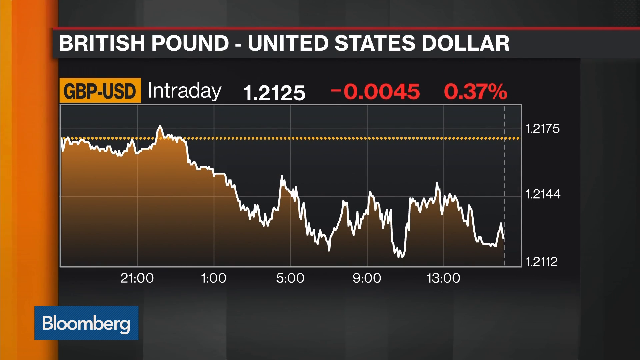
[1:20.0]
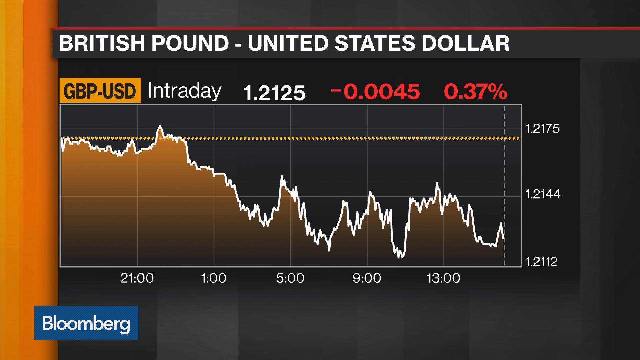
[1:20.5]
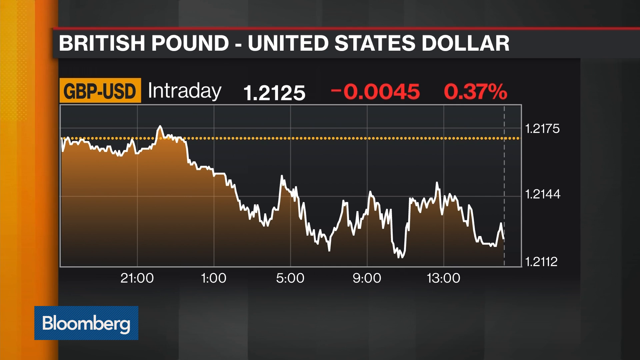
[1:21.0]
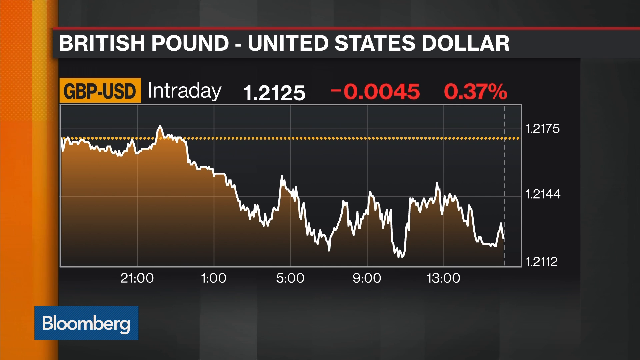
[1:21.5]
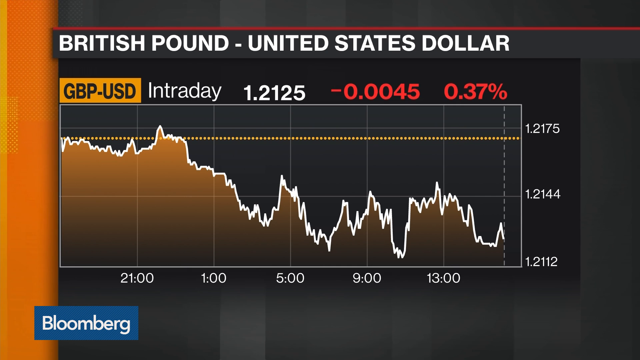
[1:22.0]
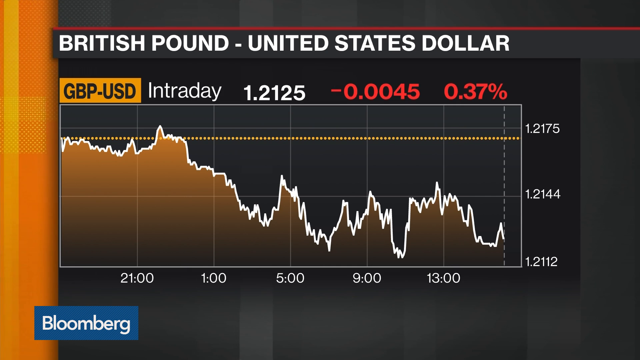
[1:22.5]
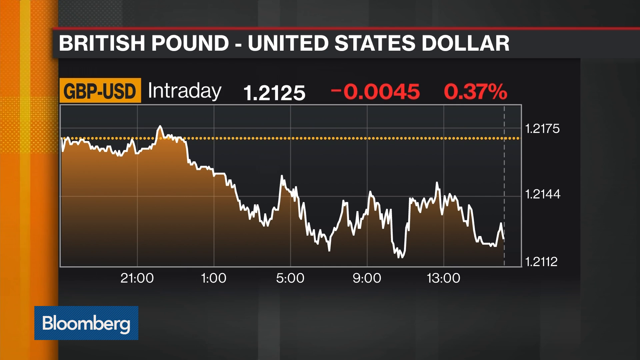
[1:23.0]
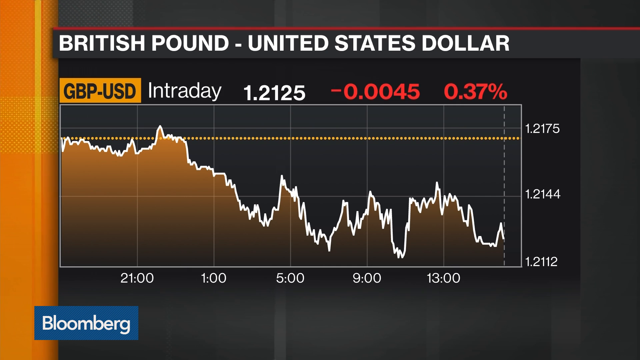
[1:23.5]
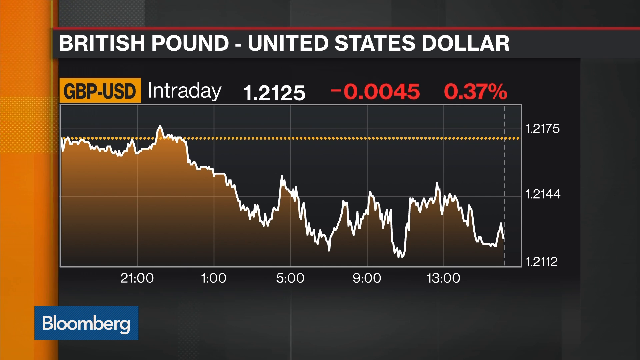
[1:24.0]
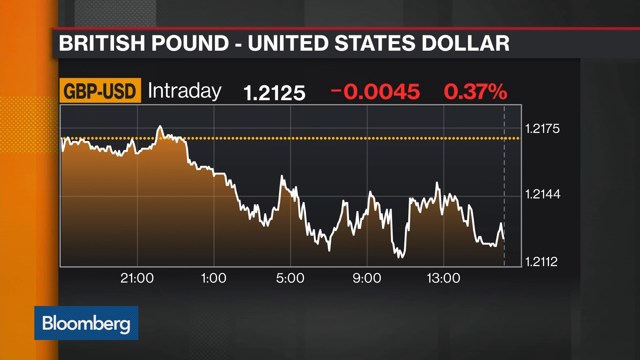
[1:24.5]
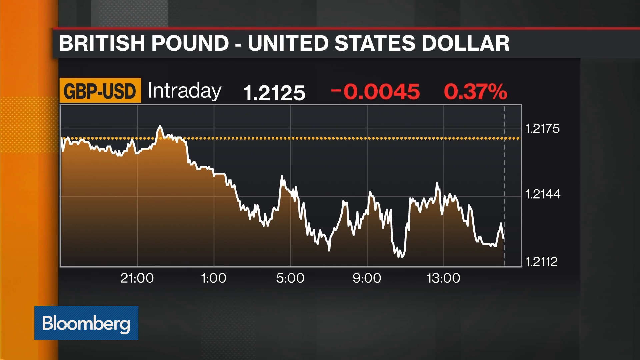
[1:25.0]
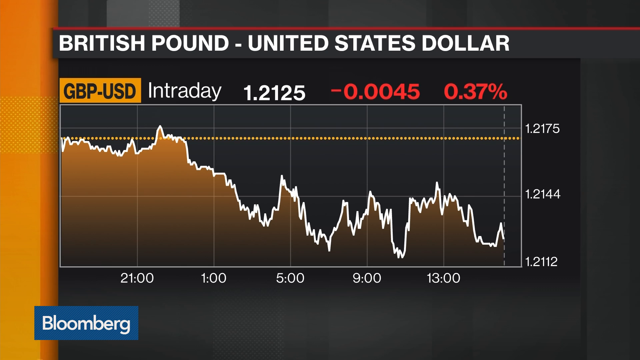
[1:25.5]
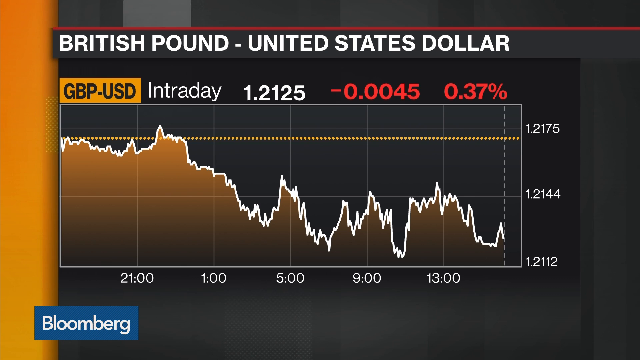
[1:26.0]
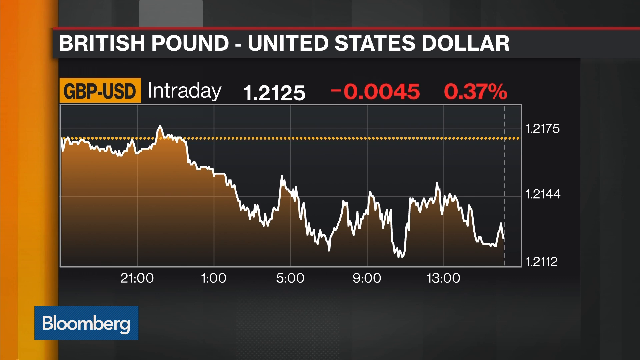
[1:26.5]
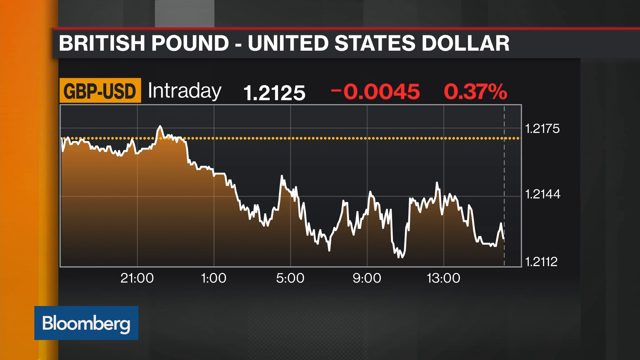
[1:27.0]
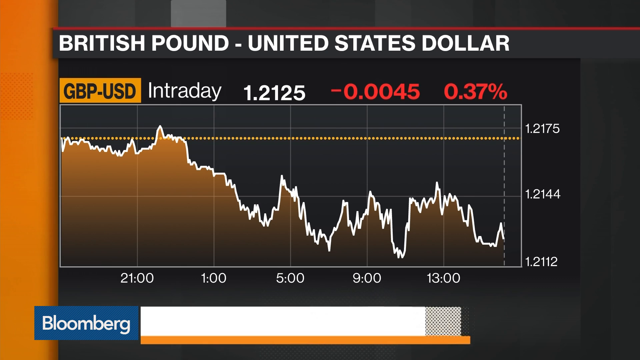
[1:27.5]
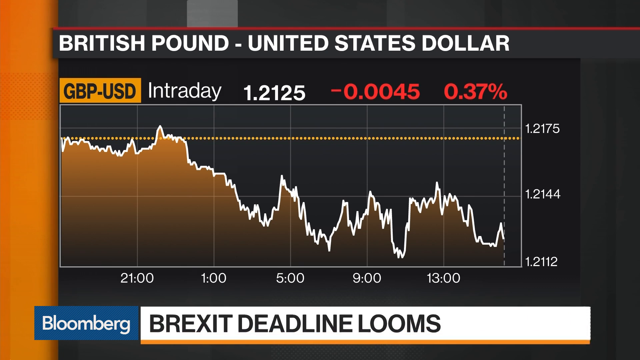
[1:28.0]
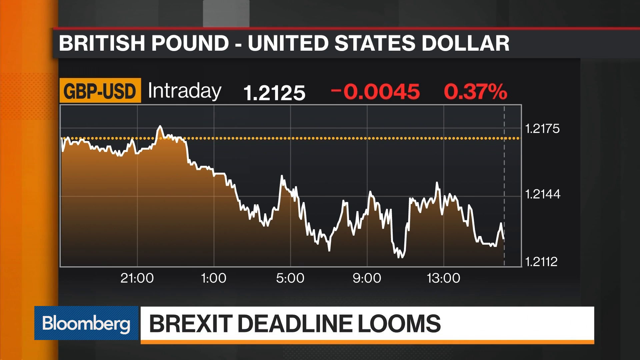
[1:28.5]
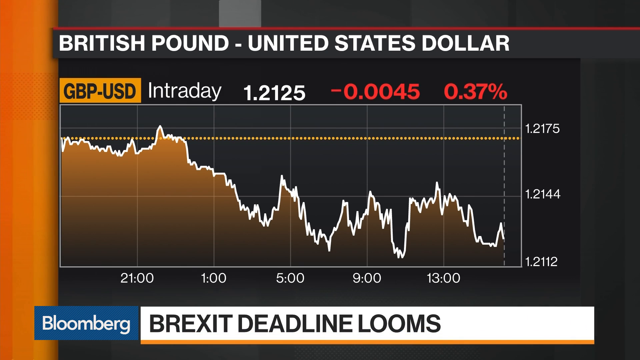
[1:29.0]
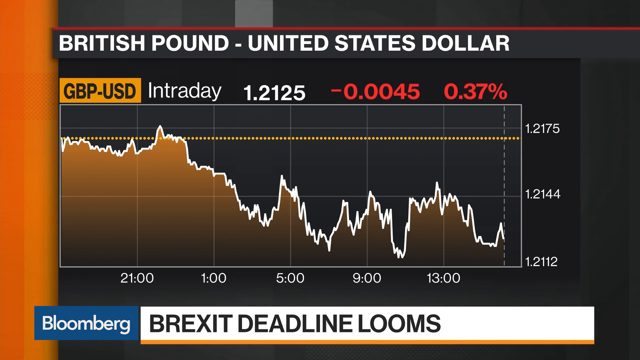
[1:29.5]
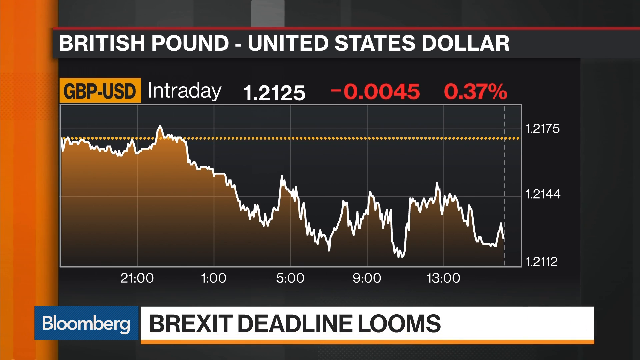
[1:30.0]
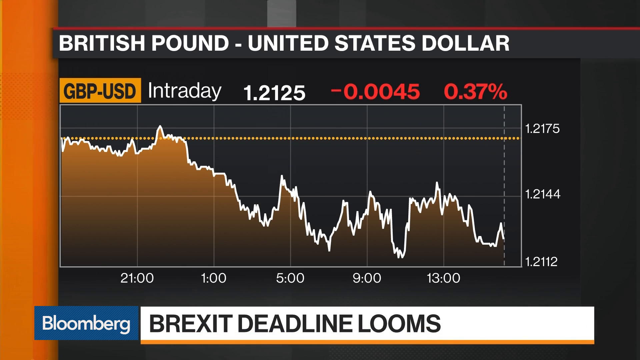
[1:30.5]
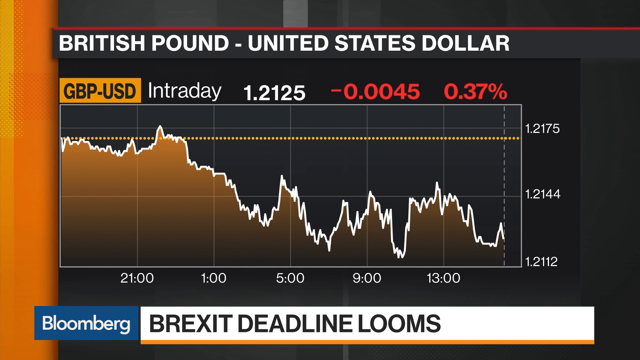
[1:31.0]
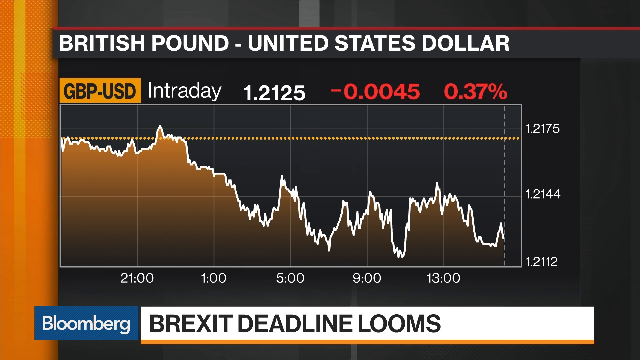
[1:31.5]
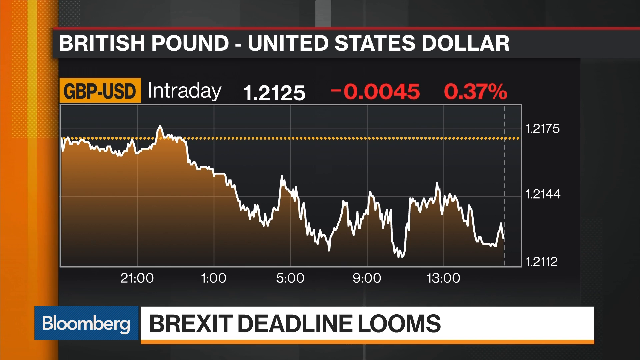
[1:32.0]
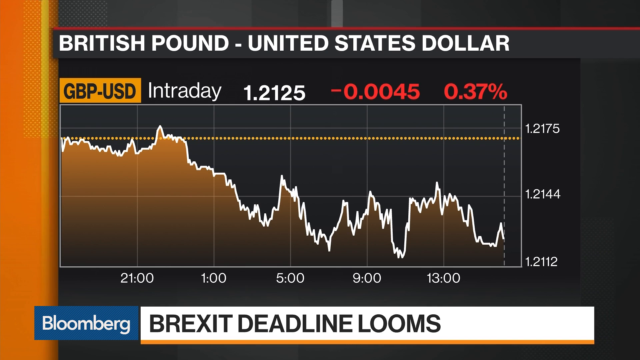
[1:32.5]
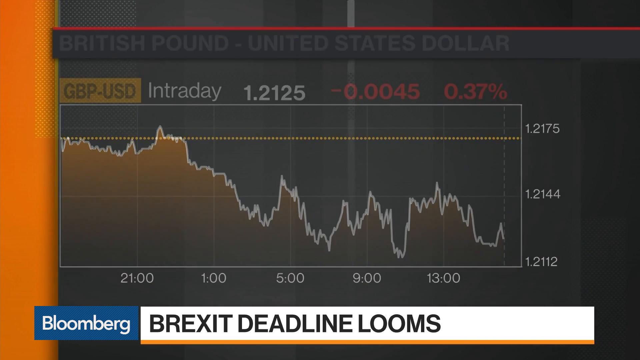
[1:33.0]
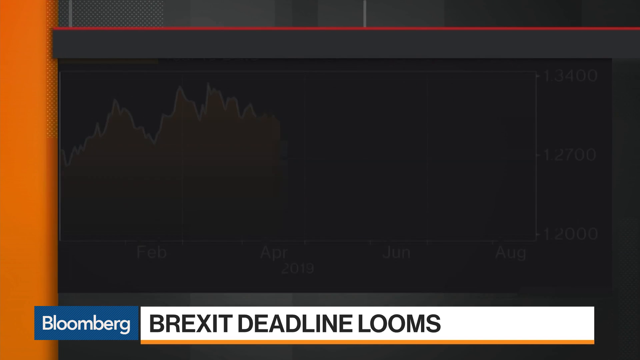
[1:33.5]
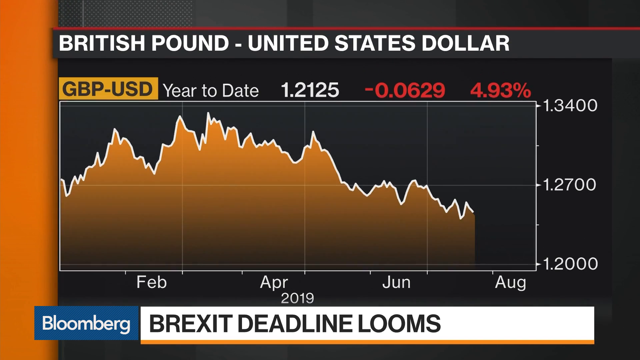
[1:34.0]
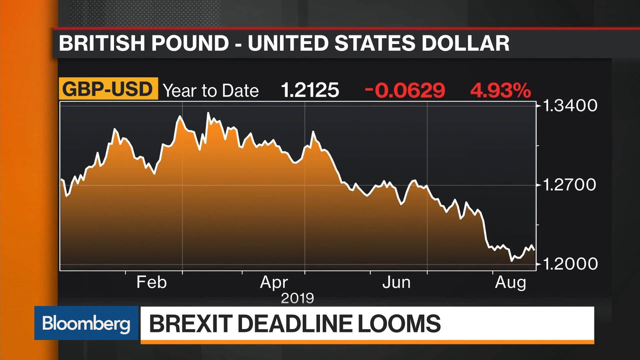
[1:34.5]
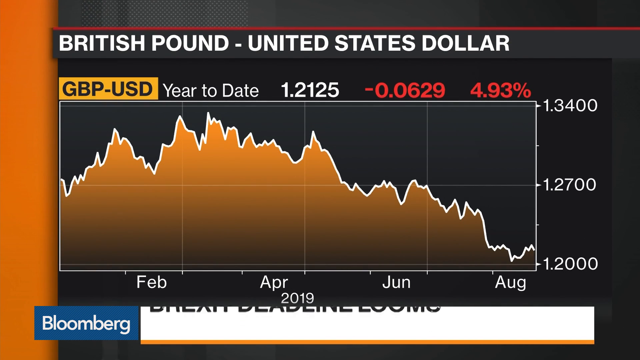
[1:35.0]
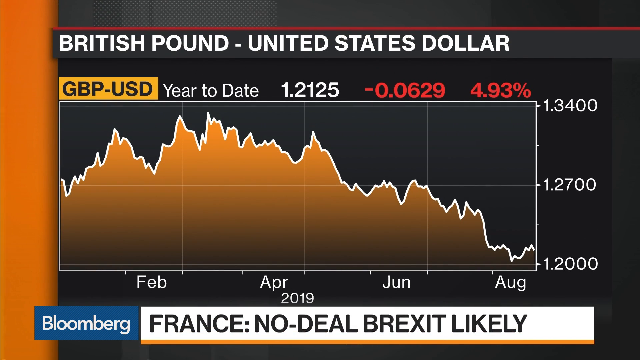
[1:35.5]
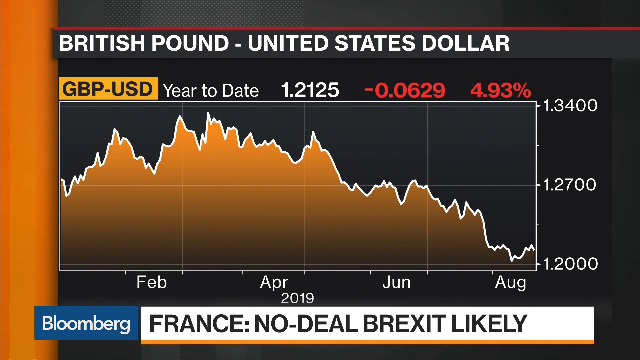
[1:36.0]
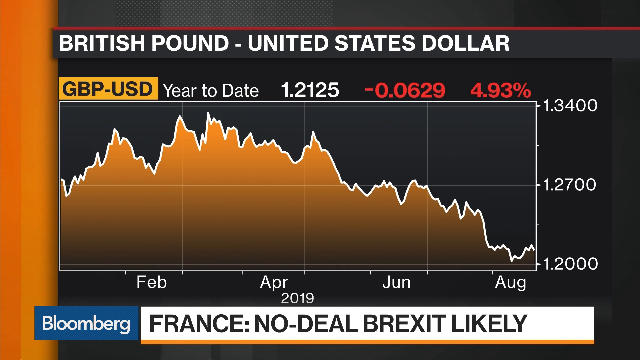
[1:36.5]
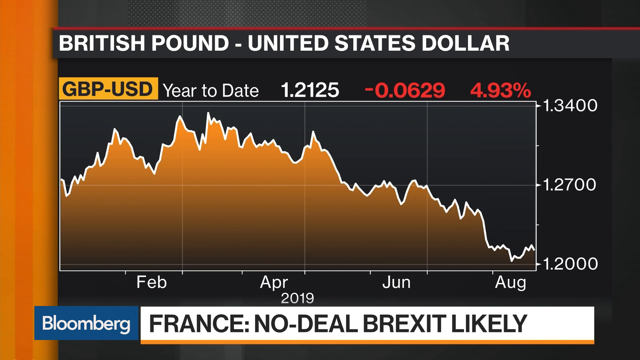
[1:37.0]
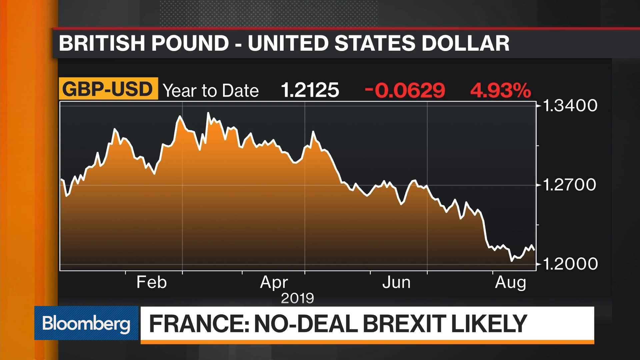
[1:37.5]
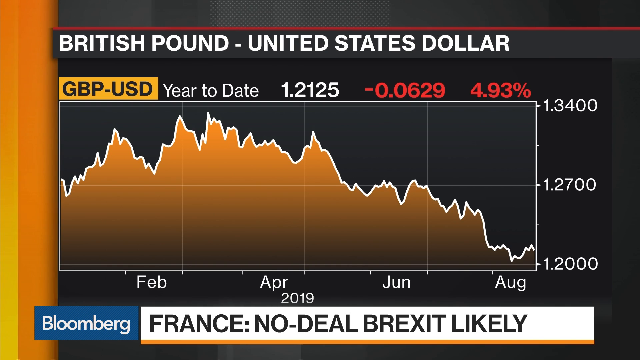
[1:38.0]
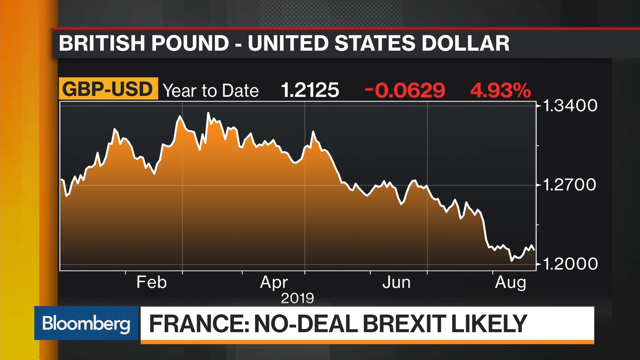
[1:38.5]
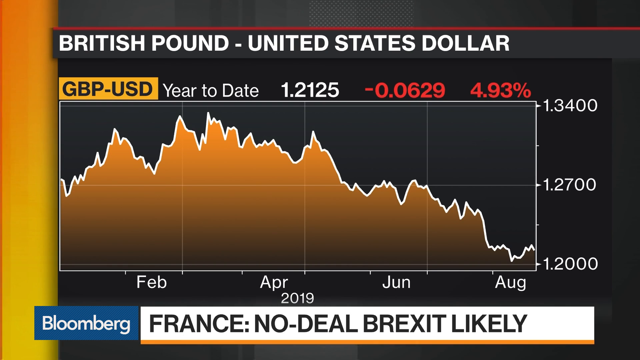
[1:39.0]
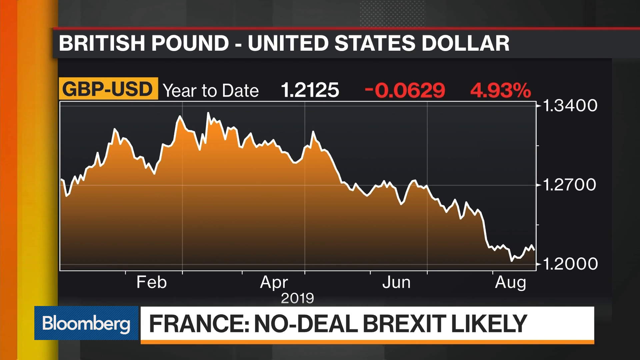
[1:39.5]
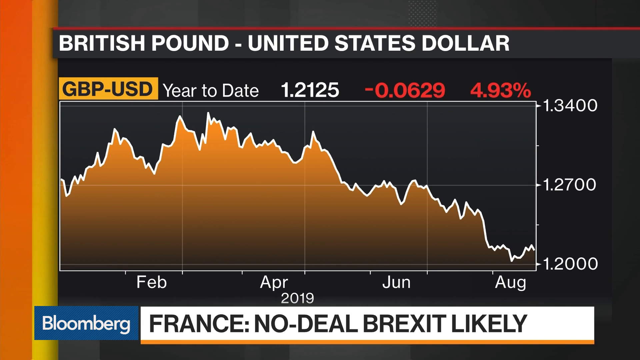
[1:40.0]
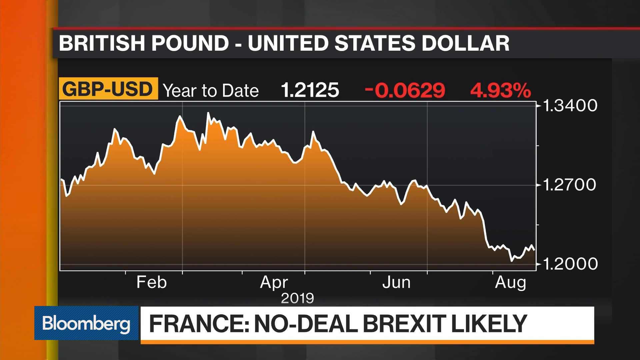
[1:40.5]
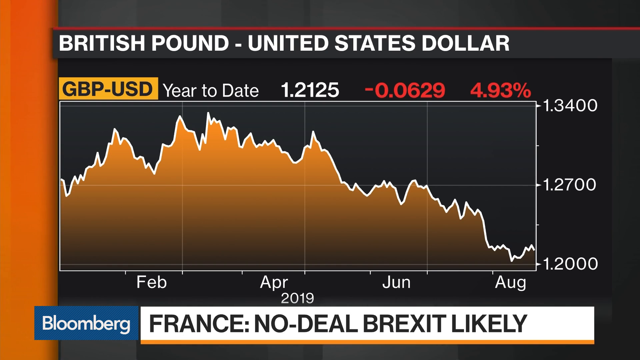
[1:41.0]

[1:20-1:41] A chart labeled "British Pound, United States Dollar" shows how the two are moving. There are two parallel lines on the chart: one is at 1.2175 and the other at 1.2134. Abigail is explaining the chart.